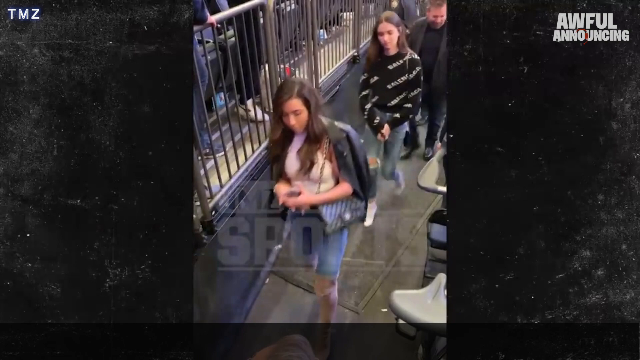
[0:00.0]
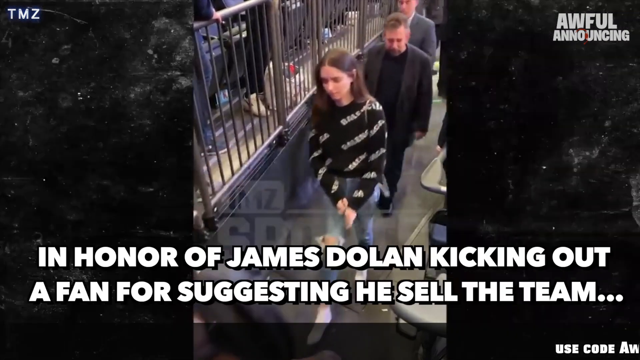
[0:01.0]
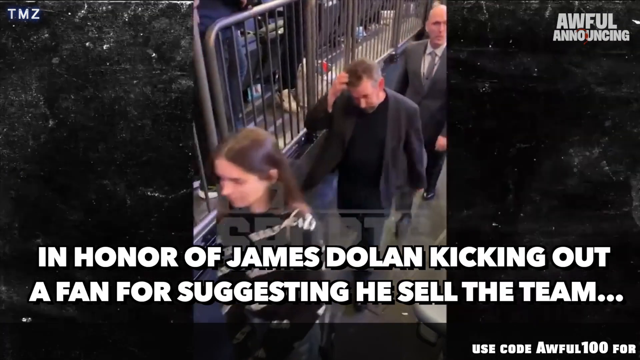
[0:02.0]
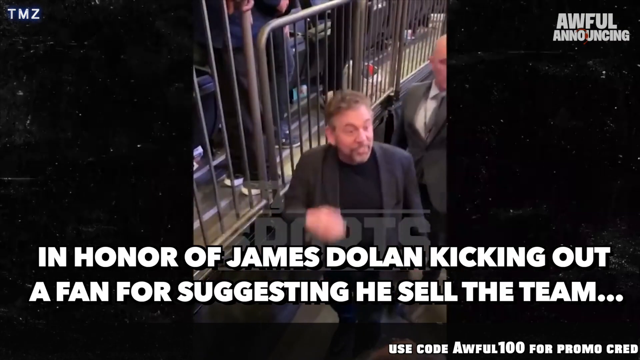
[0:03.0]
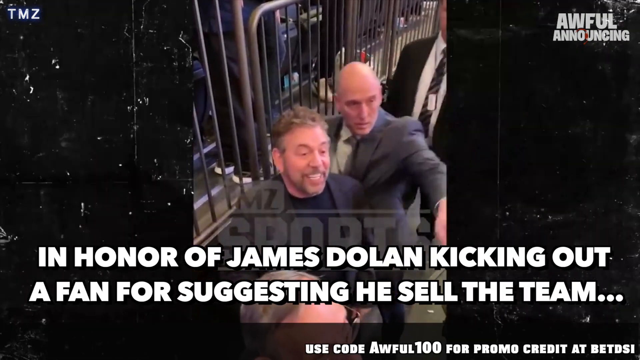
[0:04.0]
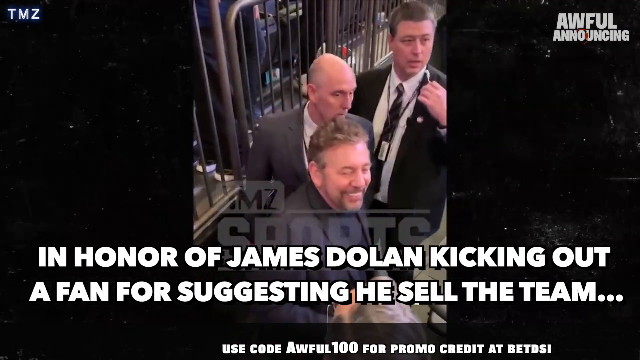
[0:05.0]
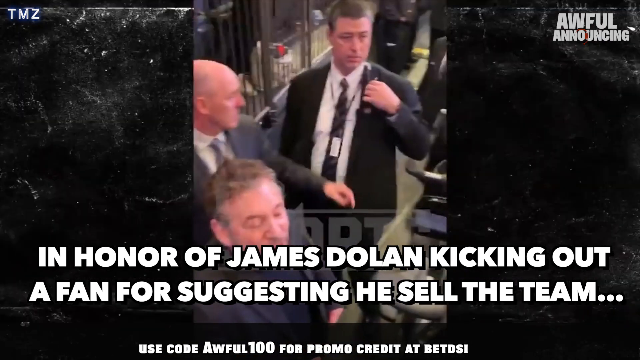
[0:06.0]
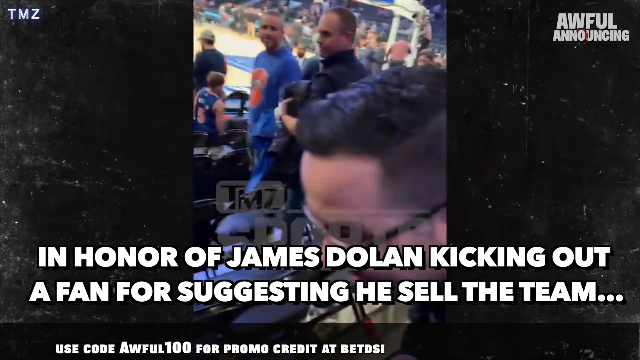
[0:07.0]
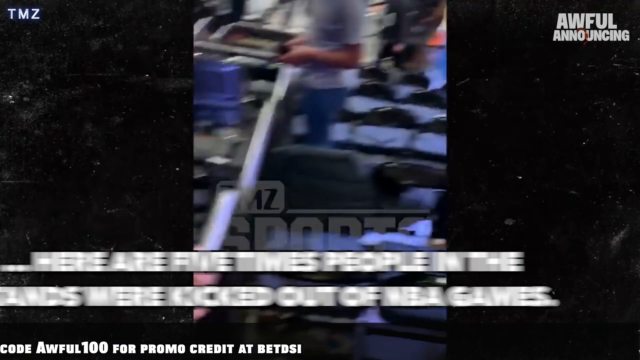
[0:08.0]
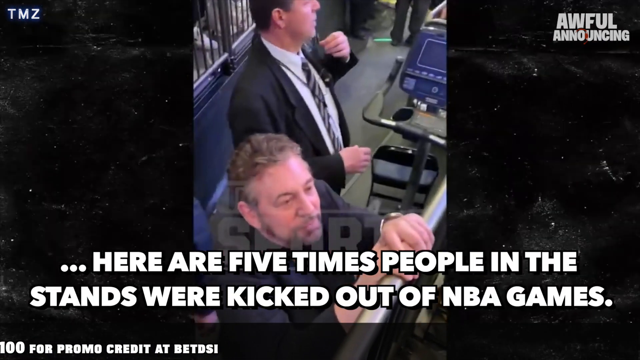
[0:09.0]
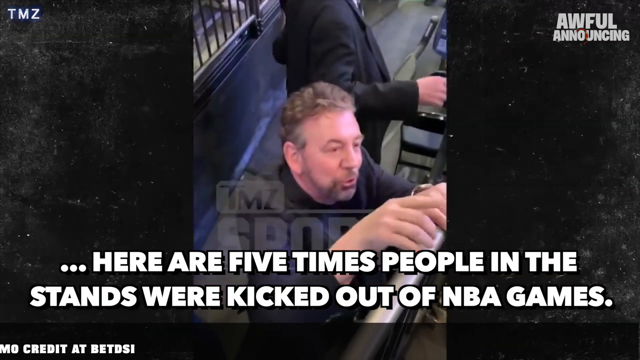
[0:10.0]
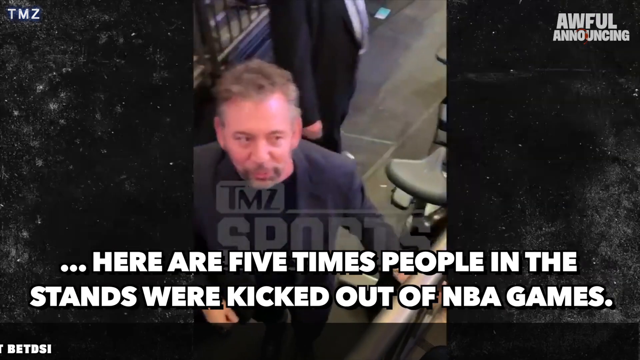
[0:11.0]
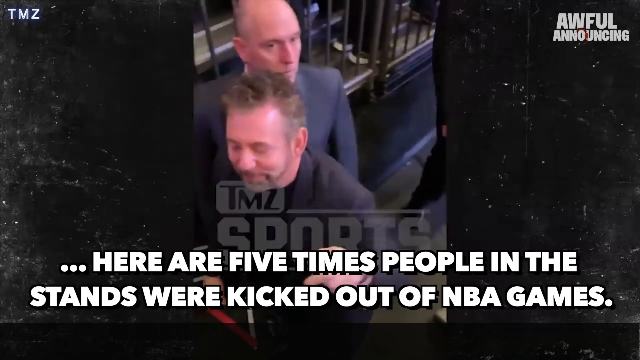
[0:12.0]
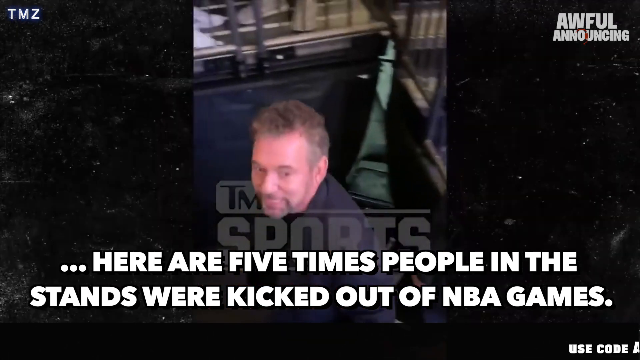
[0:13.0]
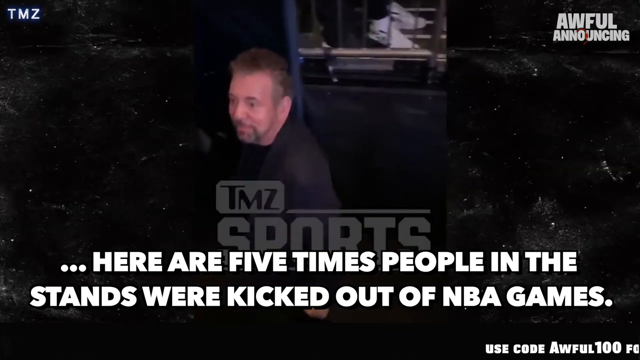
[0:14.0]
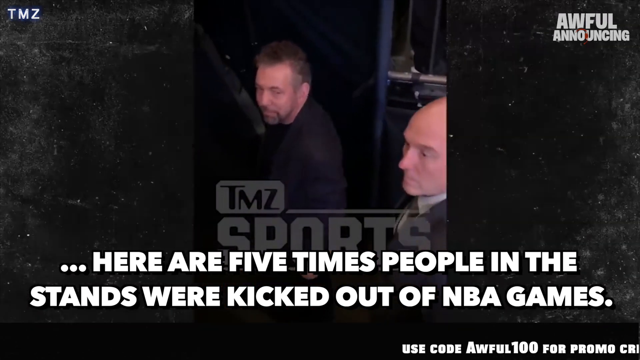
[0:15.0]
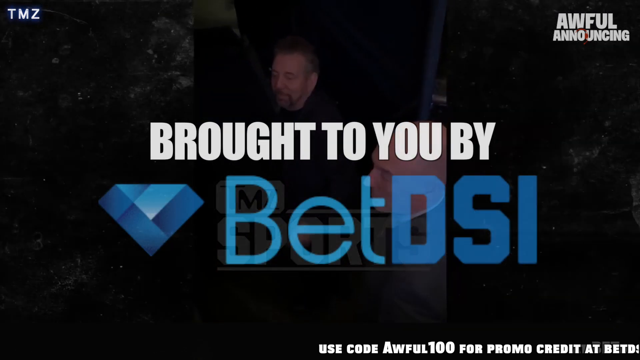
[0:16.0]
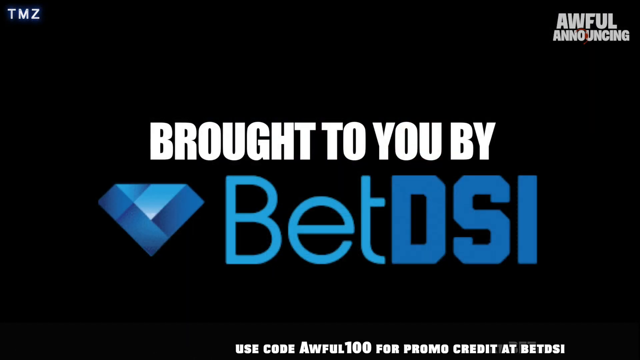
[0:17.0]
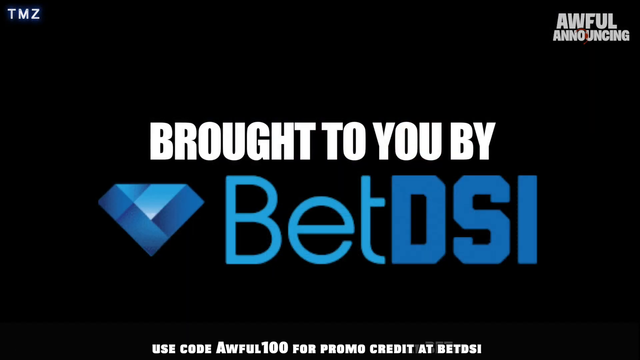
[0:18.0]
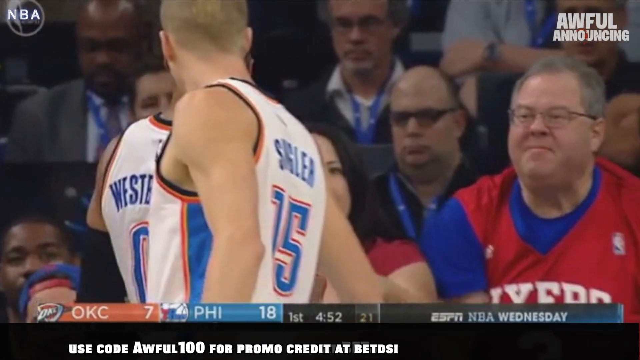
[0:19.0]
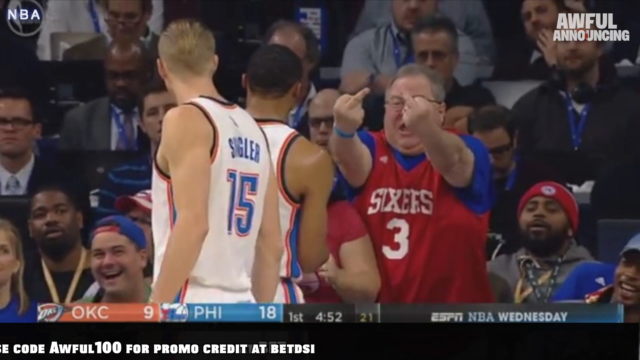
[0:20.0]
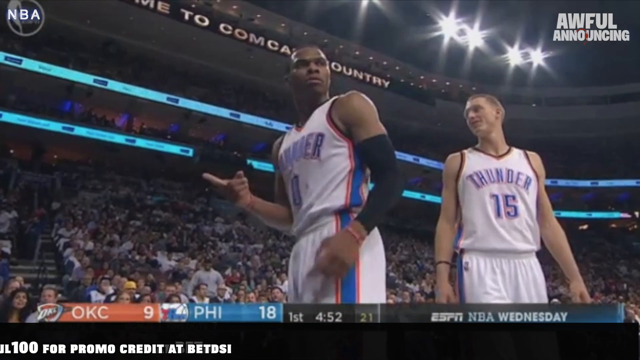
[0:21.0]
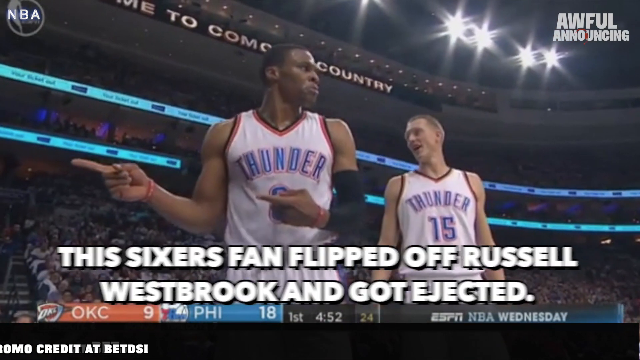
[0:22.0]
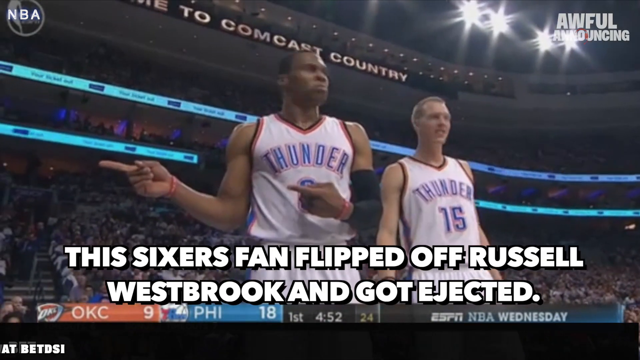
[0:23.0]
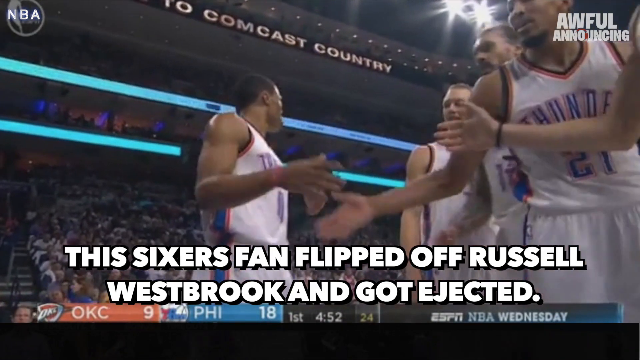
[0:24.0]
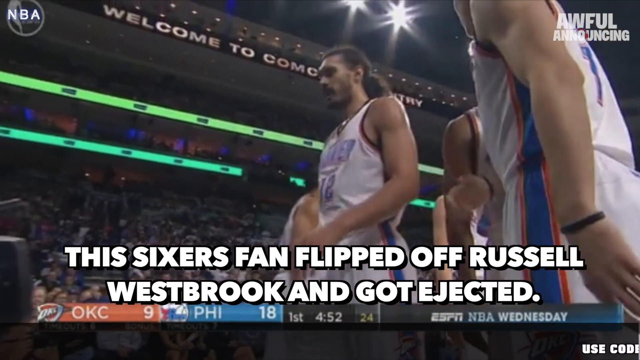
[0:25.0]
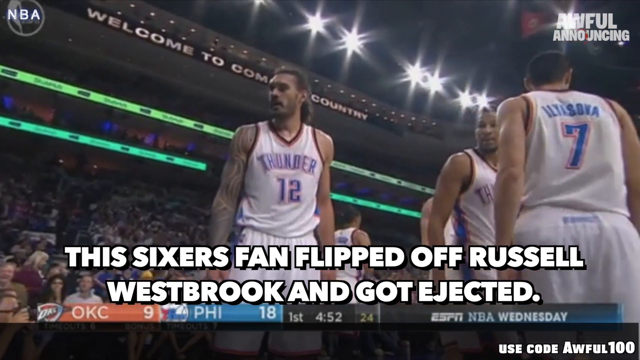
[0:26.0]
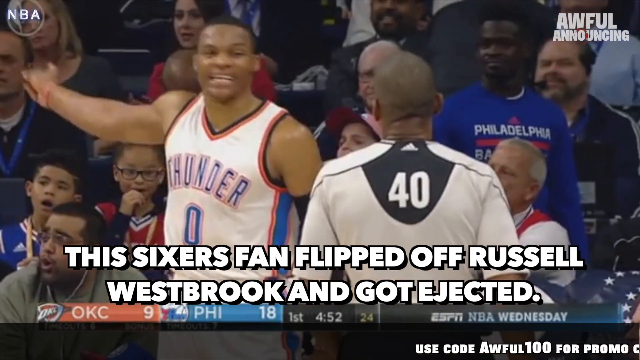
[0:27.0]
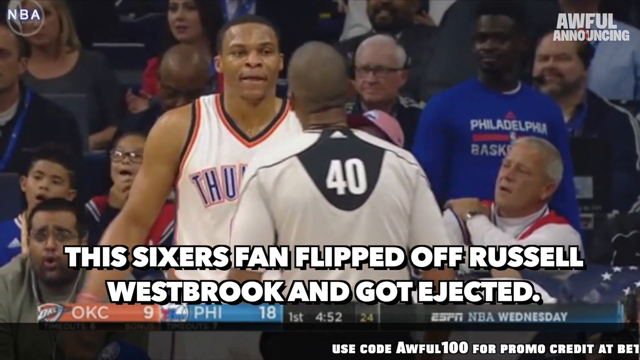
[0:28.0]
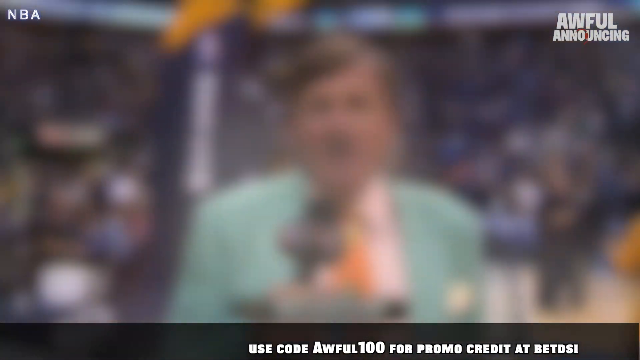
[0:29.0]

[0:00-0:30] The video opens on a couple of people walking out in a corridor-type setting, with a fence next to them. Text at the bottom center of the screen reads "in honor of James Dolan kicking out a fan for suggesting he sell the team. Here are five times people in the stands were kicked out of NBA games. Brought to you by Bet DCI." Next to "Bet DCI" is a blue diamond logo. The words "awful announcing" appear in the upper right-hand corner and "TMZ" in the upper left-hand corner. A basketball game between the Oklahoma City Thunder and the Philadelphia Sixers follows, showing a fan in the stands flipping off the opposing team's players in a very agitated manner, while several fans in the background watch the interaction. The entire video is rectangular.